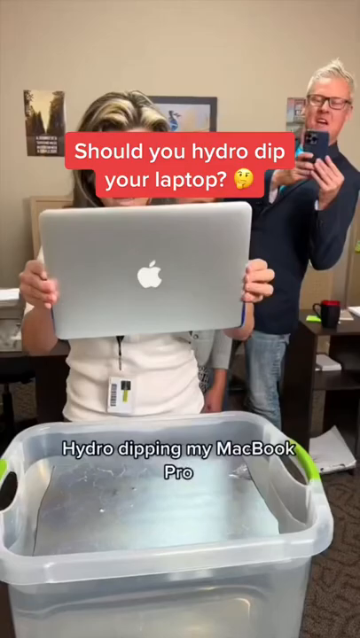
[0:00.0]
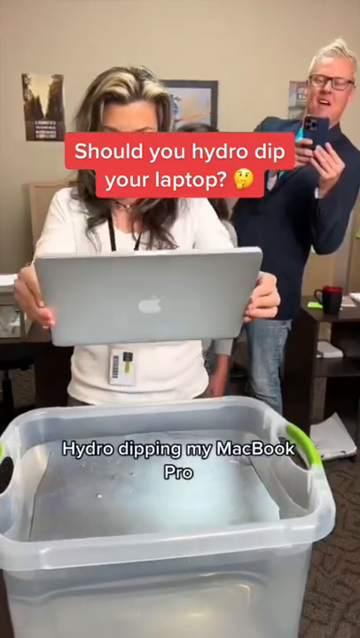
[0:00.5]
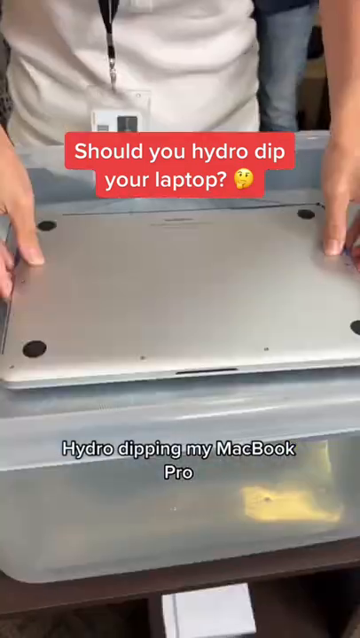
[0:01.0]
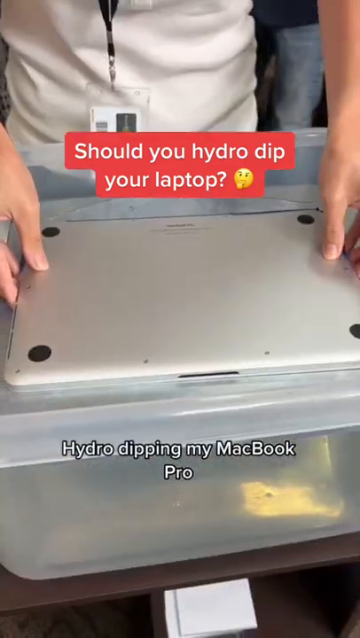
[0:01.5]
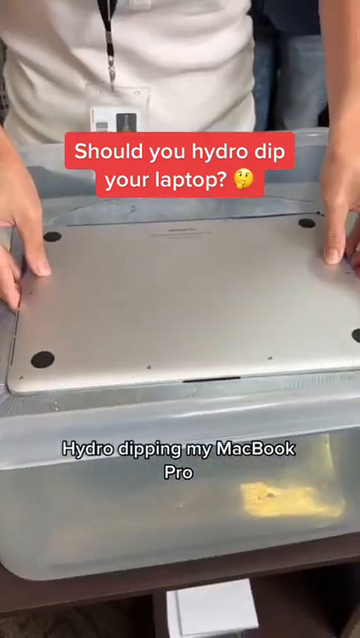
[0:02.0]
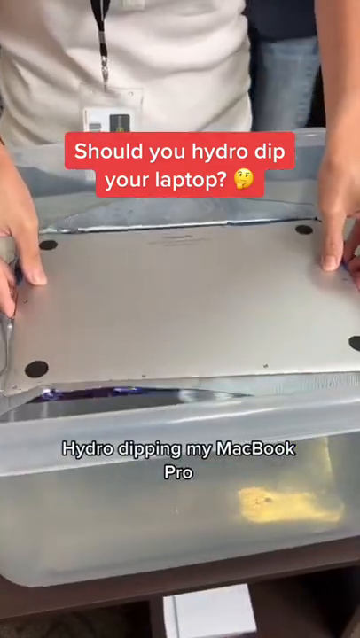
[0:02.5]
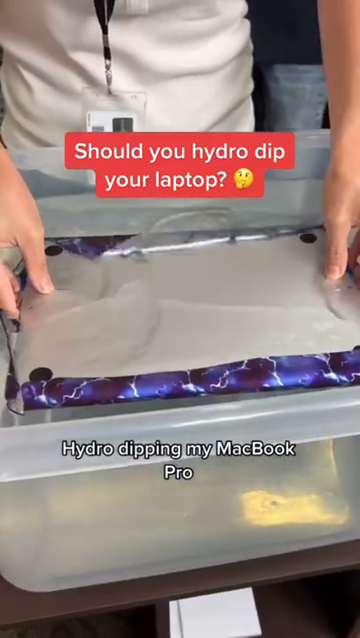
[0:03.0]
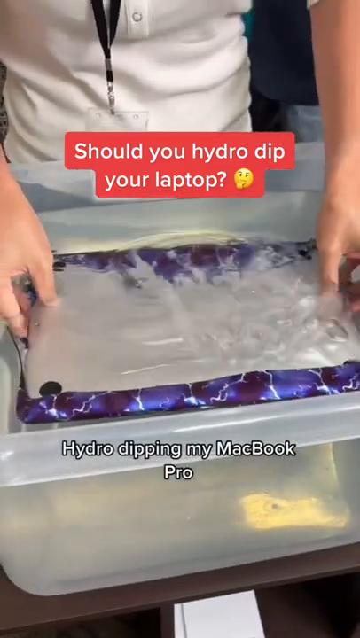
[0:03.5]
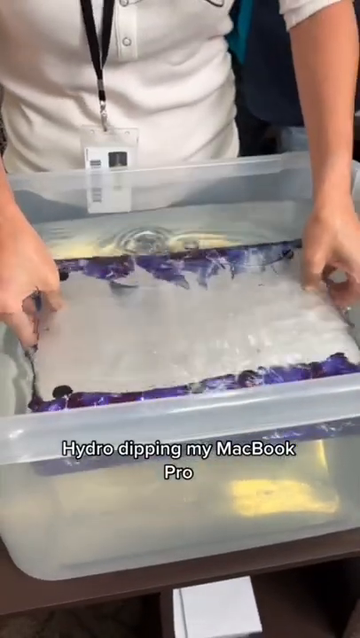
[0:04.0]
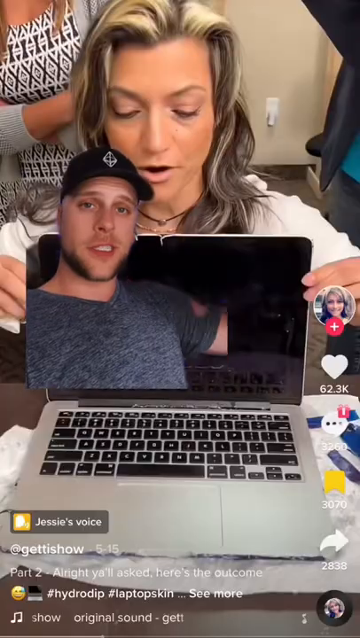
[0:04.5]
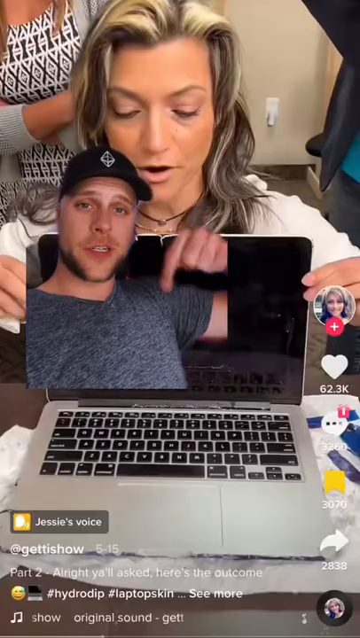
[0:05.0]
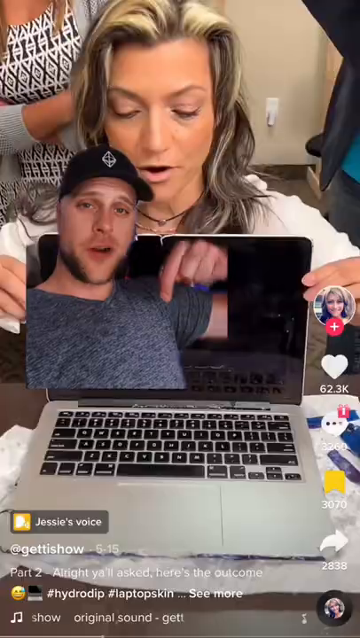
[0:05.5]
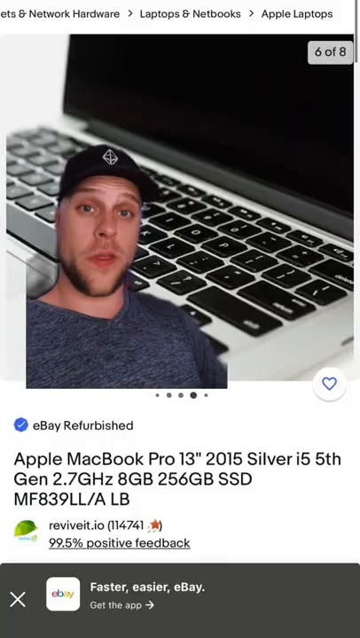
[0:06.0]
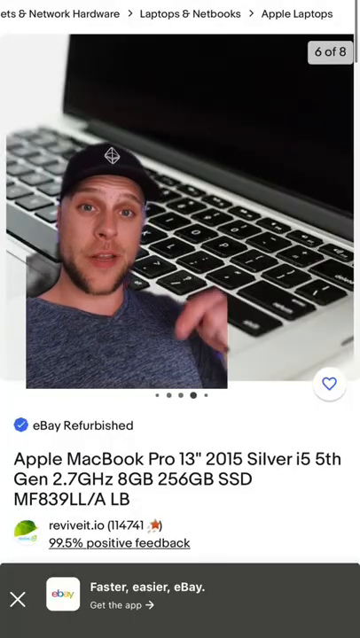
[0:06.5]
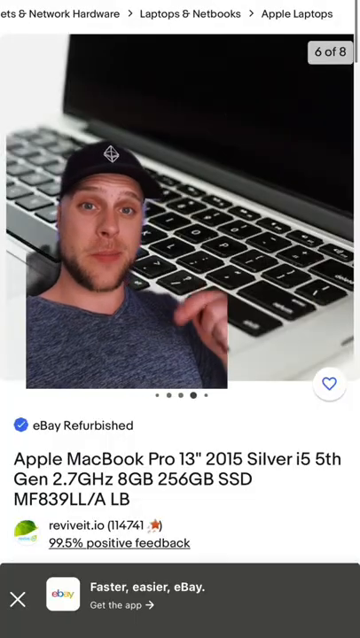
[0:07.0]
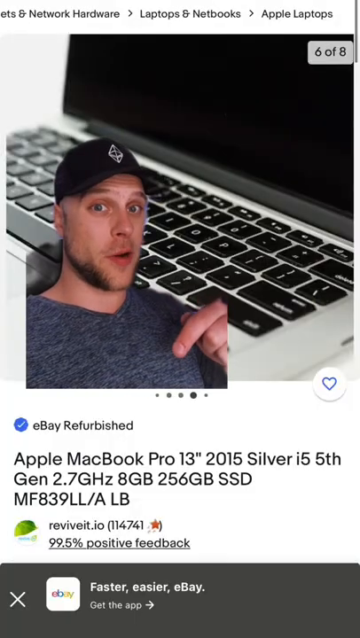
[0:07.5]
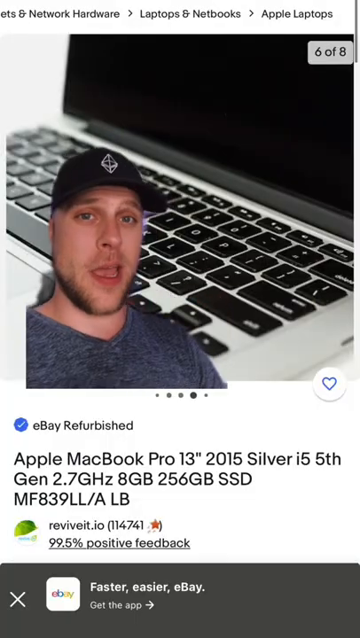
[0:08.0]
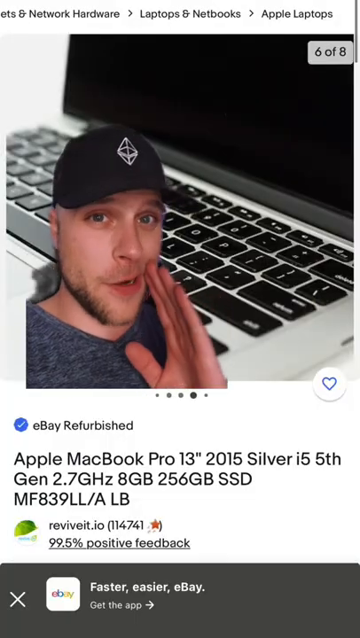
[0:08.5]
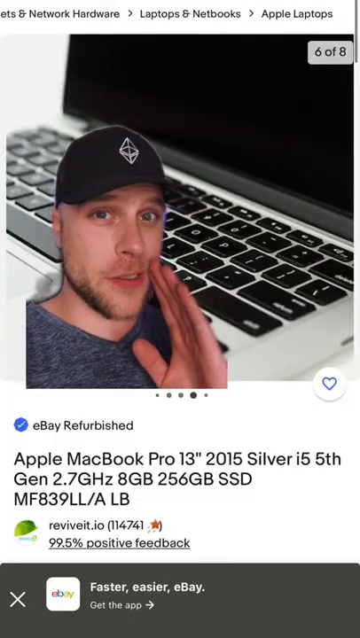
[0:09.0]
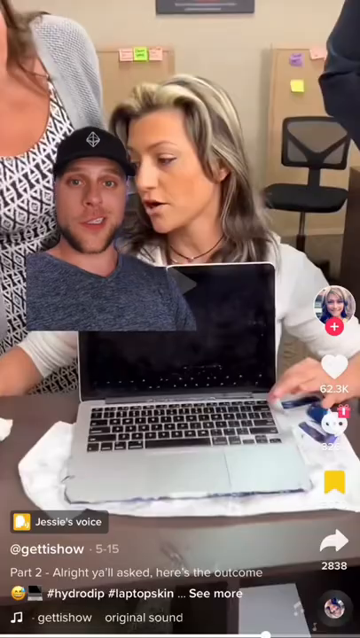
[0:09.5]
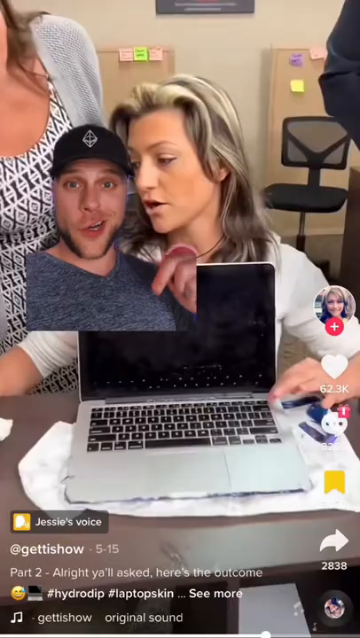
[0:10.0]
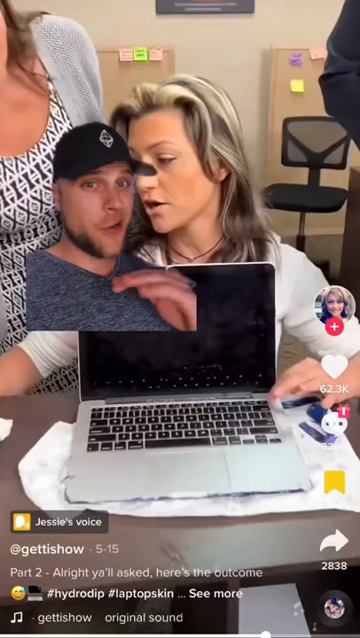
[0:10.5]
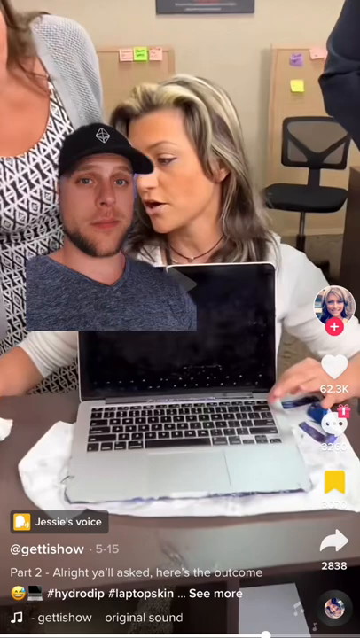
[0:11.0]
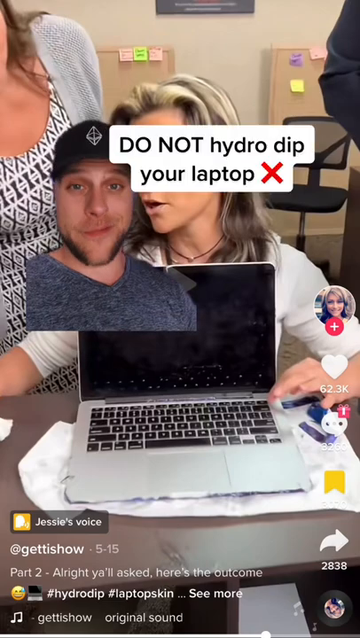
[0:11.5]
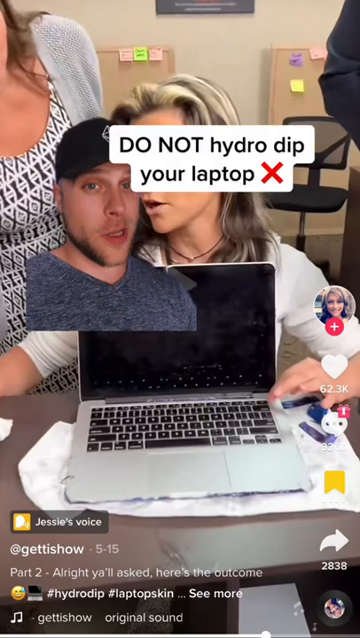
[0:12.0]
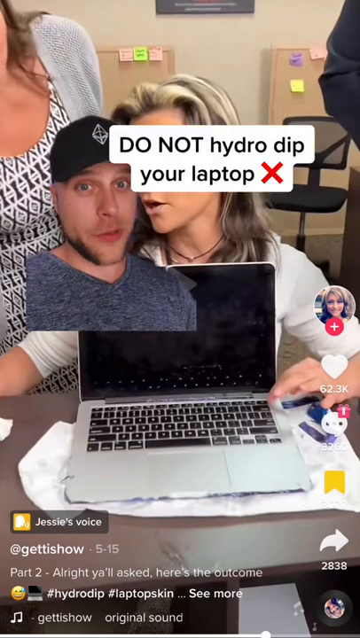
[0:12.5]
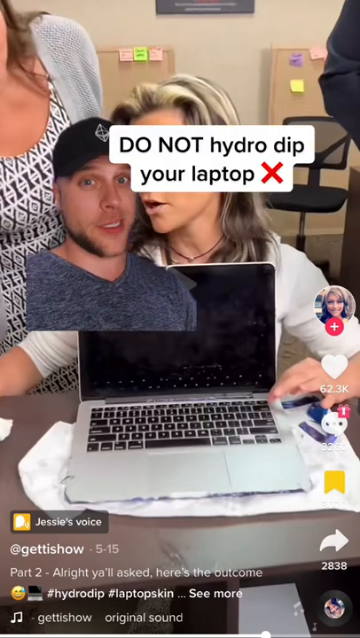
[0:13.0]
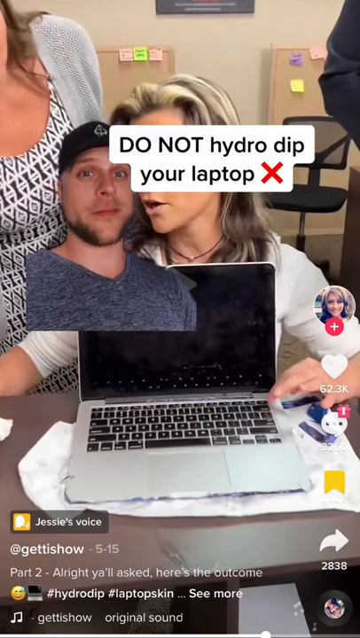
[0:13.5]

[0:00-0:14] A man who appears to be white, wearing a hat, has a laptop right behind him. On-screen text reads "don't hydro dip your laptop." A woman holds a laptop in her hand and puts it into what seems to be a pool of water in a bucket; this footage is shown repeatedly. The laptop looks like a Mac computer. The man points his hand and appears to be whispering, seemingly giving advice about something that should not be done. Another picture carries the question "should you hydro dip your laptop," and a person appears to be looking and testing whether this is something they should do. The footage of the laptop being put into the water is shown again while the man continues to point. A picture with a note indicates that the laptop is an Apple Mac. The man seems to be sitting down as he gives advice about whether a person should hydro dip a laptop.